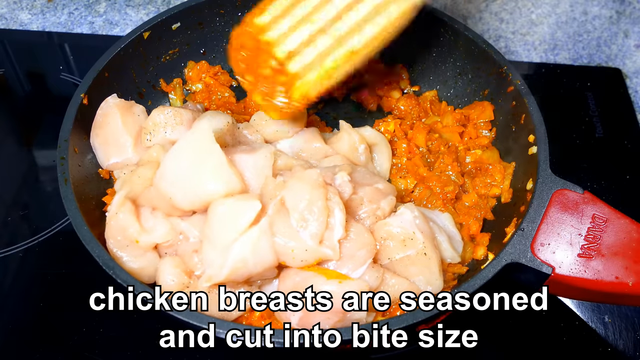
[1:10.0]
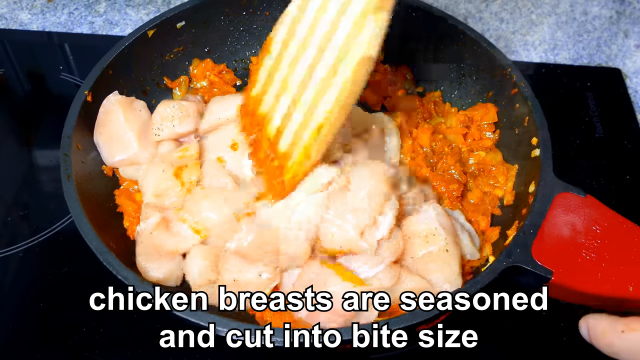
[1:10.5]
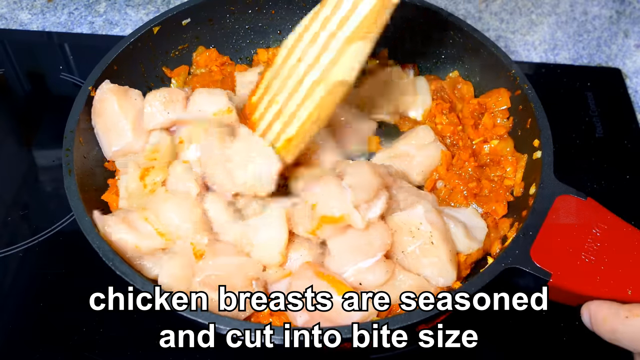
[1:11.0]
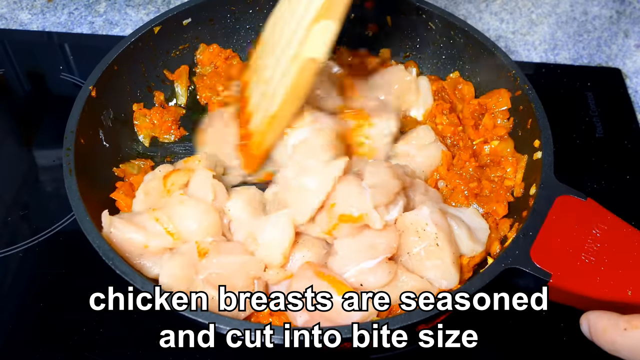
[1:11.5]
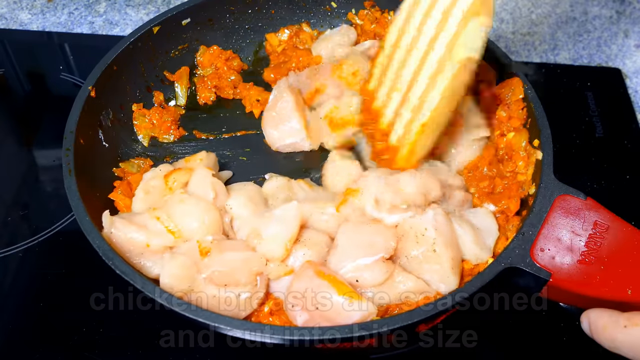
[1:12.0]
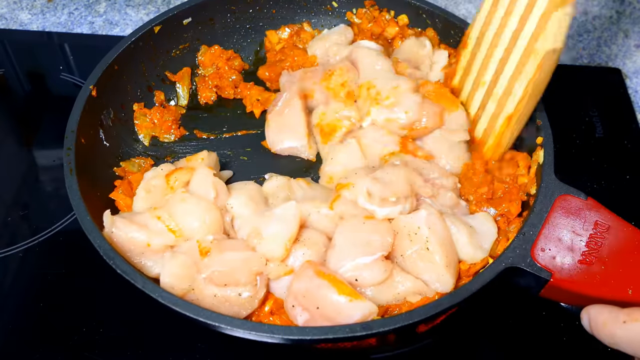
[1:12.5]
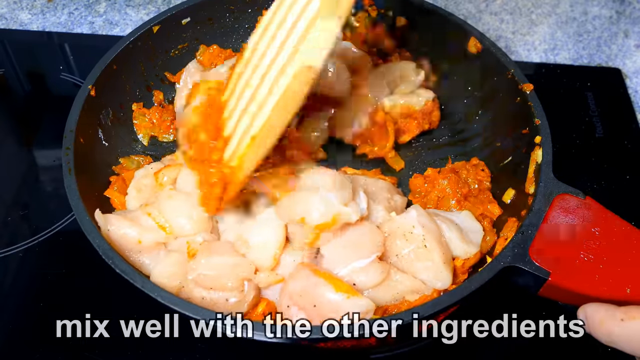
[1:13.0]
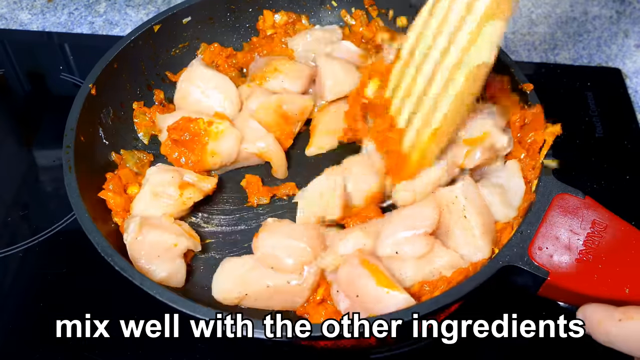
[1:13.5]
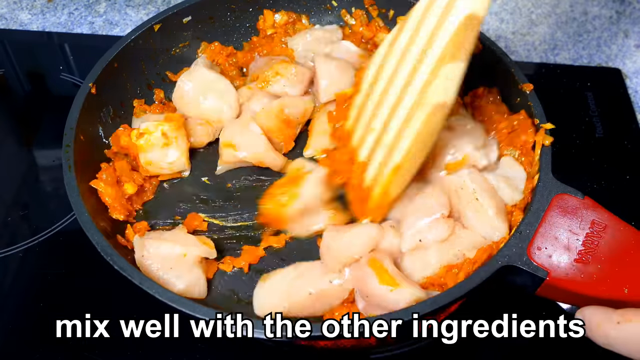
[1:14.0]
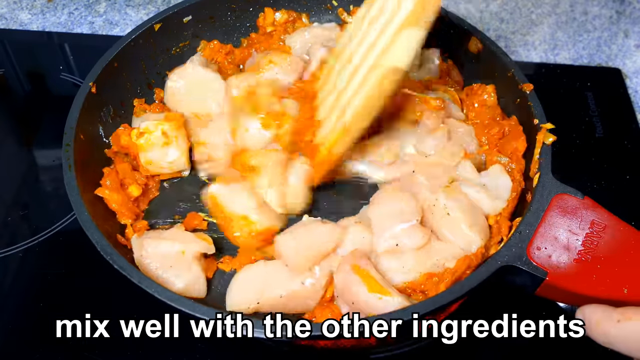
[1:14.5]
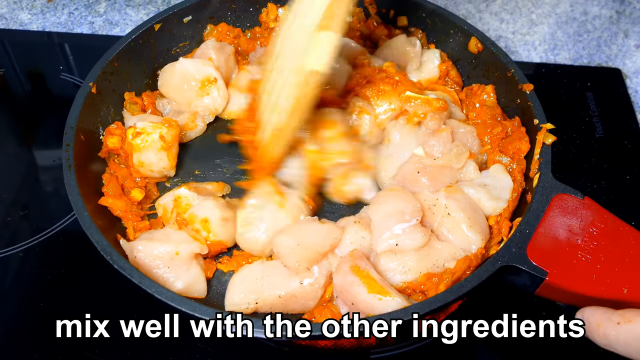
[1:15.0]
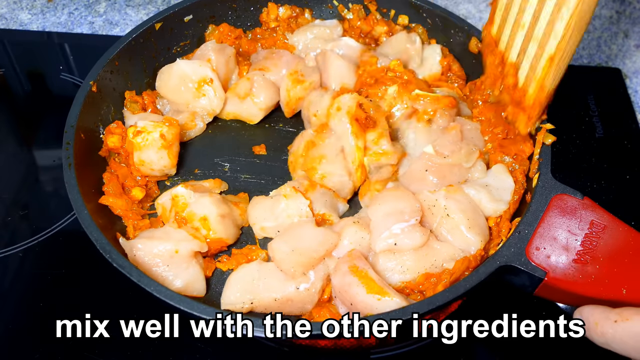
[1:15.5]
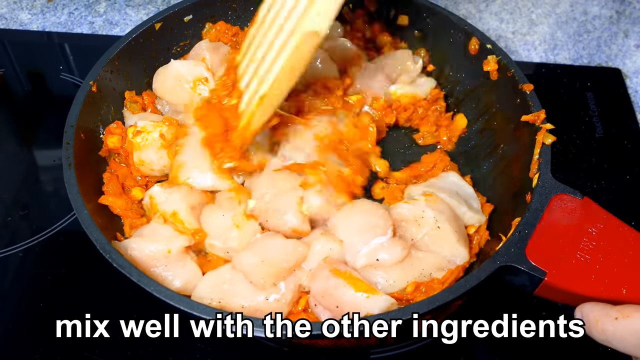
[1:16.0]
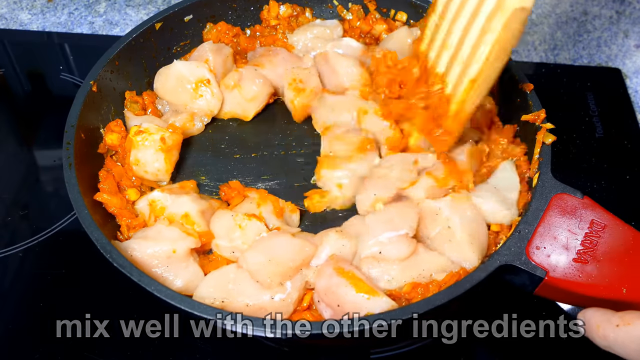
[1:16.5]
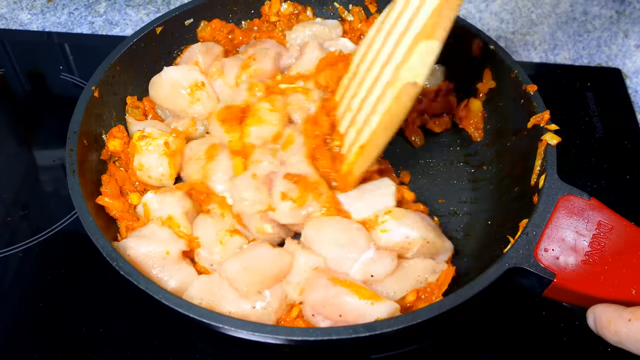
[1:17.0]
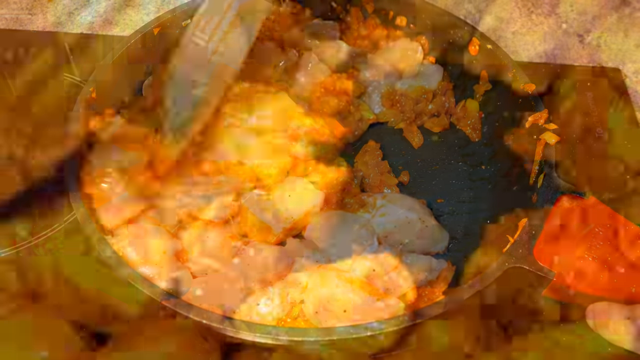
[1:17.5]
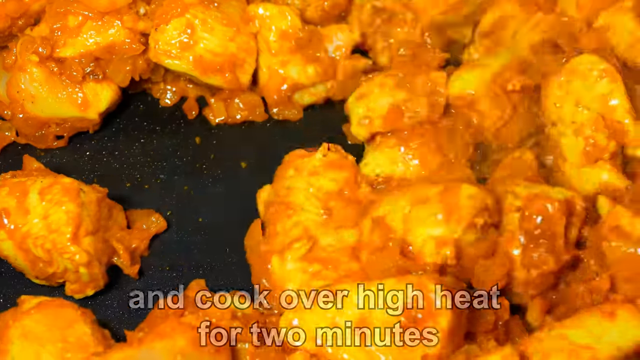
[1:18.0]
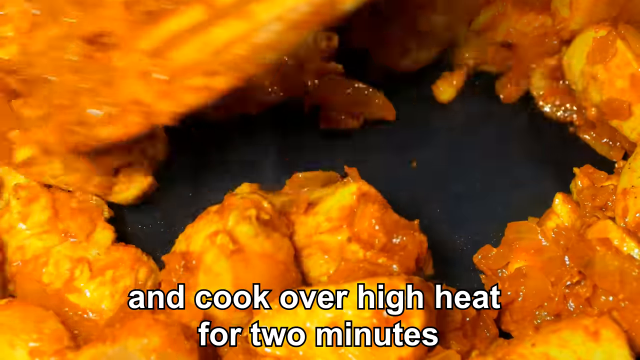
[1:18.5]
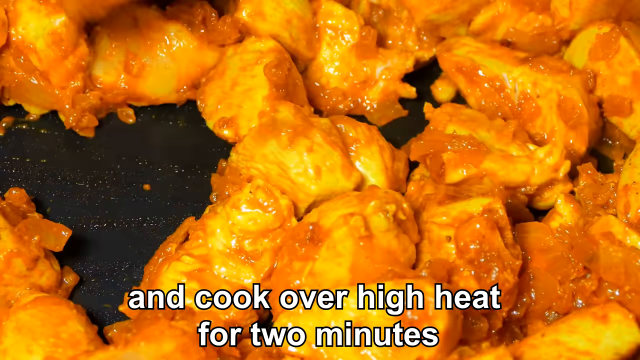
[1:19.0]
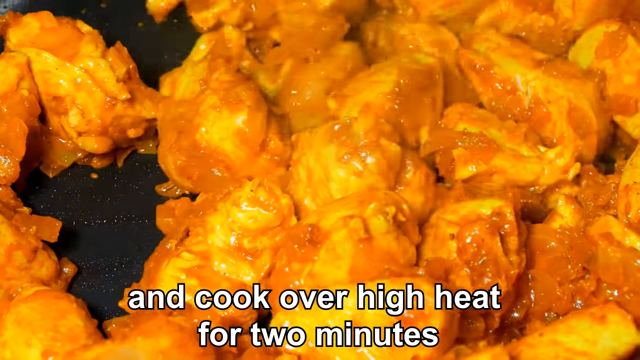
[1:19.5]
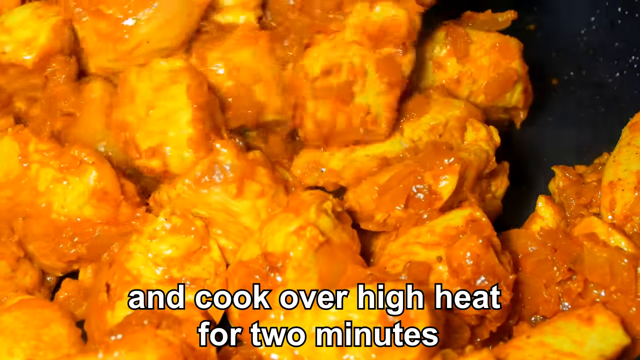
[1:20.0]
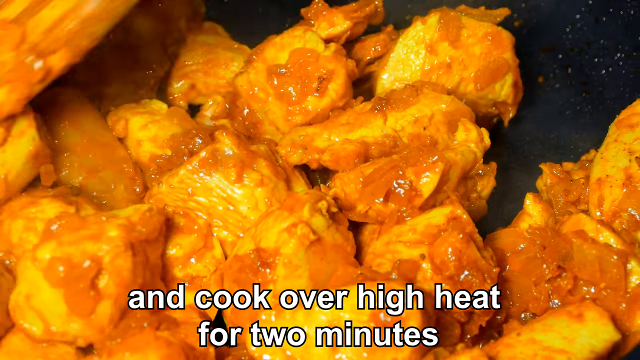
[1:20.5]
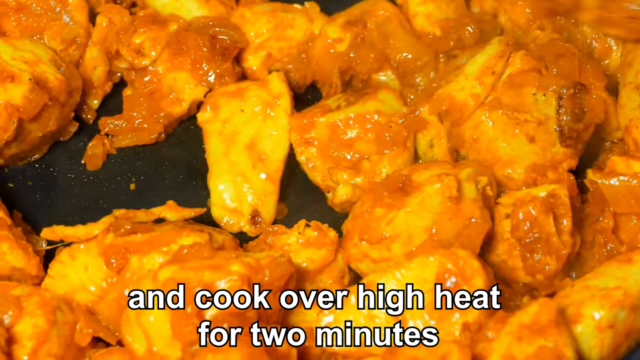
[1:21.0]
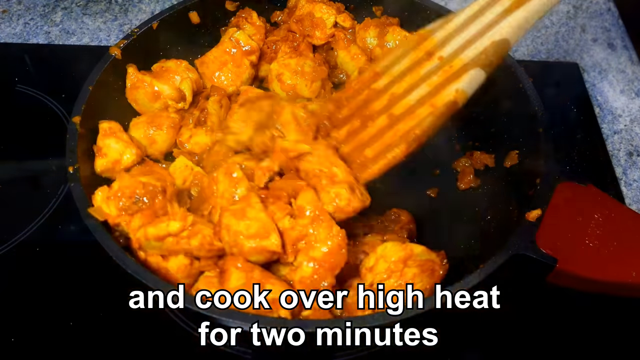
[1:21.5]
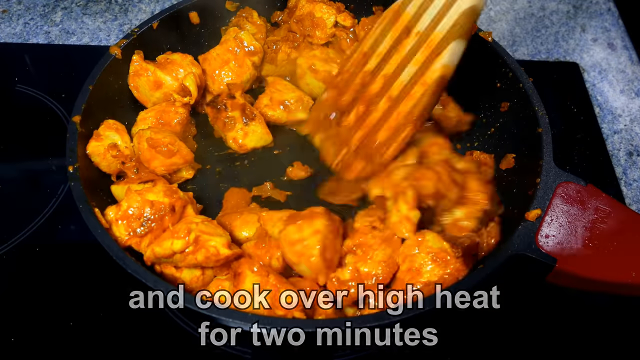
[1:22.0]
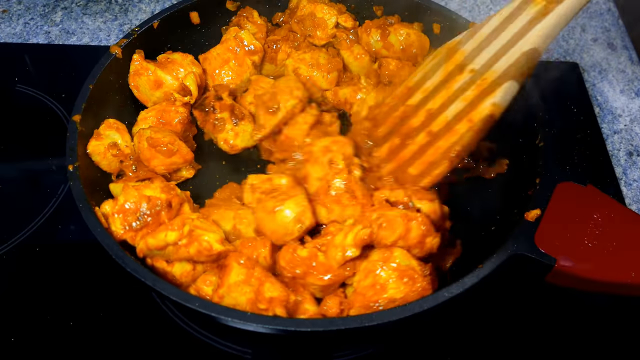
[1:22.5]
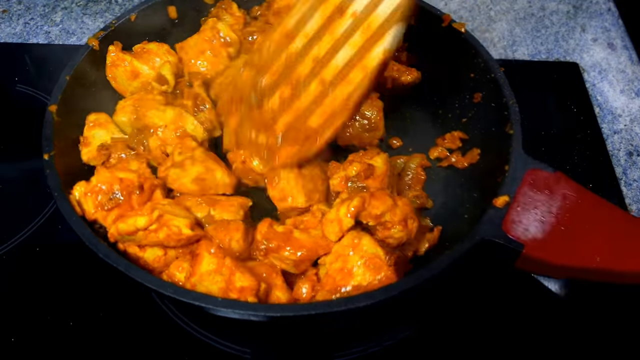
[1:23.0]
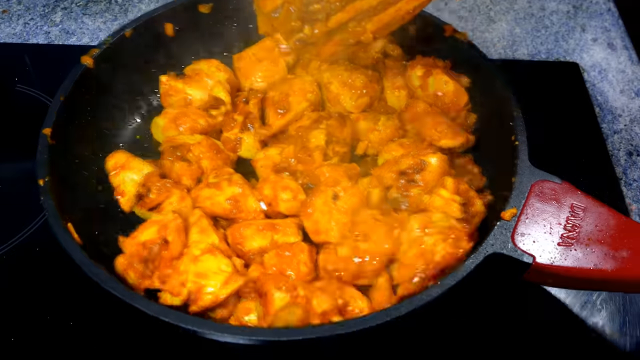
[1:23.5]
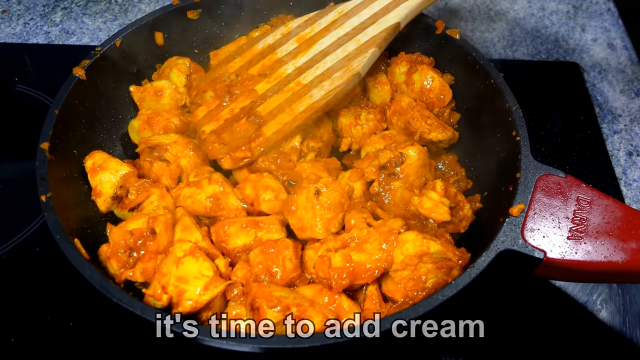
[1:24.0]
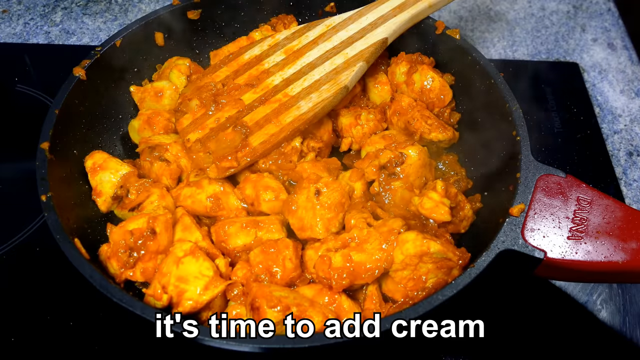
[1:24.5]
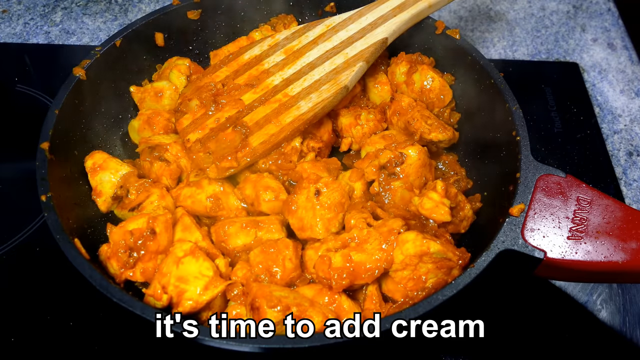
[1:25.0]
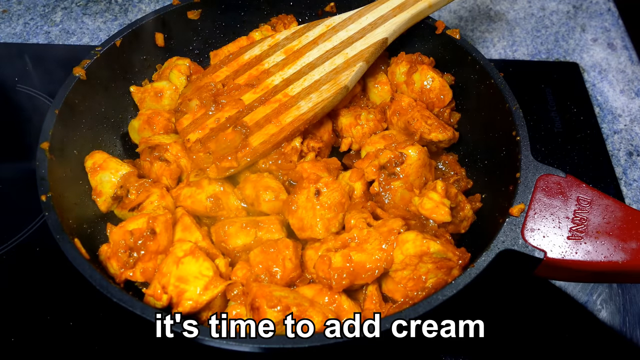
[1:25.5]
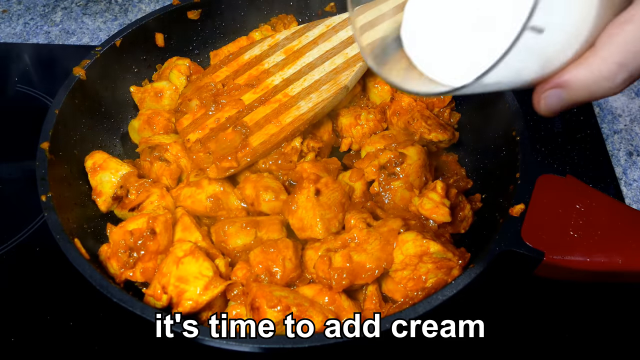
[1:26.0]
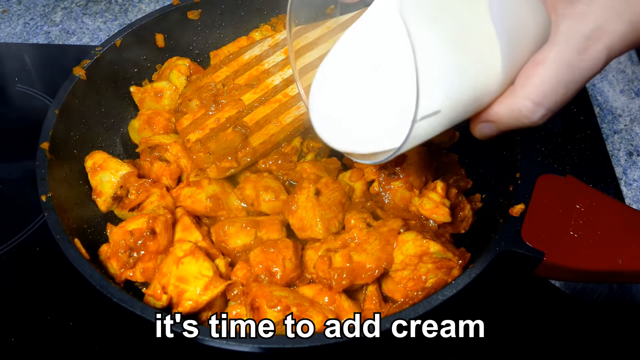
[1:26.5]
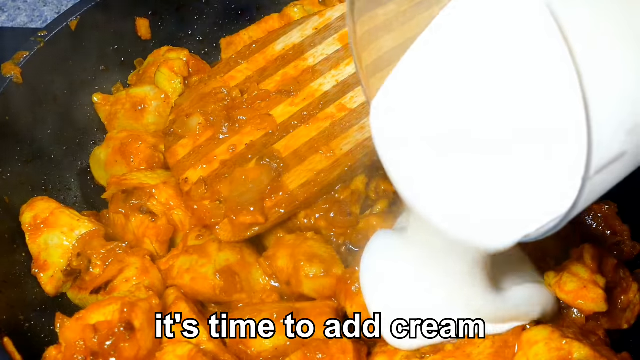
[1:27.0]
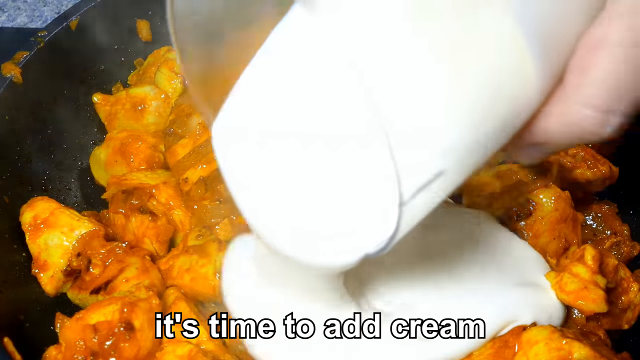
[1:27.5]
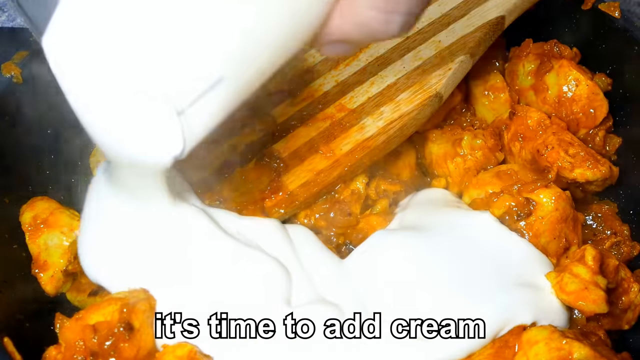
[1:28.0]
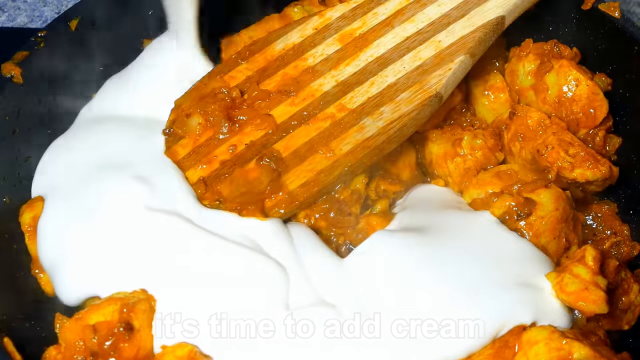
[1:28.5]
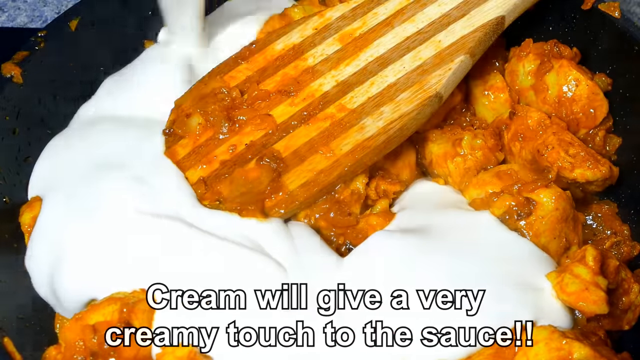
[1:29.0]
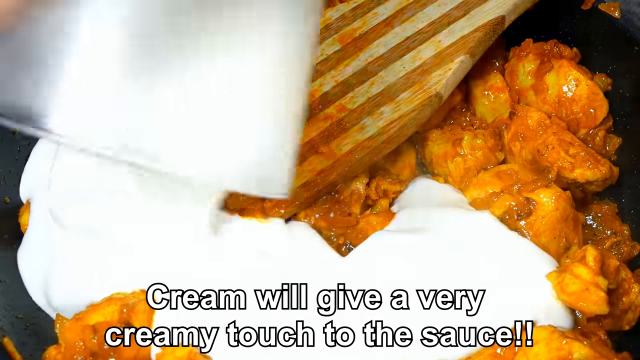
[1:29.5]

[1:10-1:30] A wooden spoon stirs the chicken into the sauce. Text says "cook over high heat for two minutes." A cup of cream is then added to the pan to be mixed with the partially cooked chicken and the other ingredients. The black pan with a red handle on the right is on a stovetop, and a wooden spoon-type spatula stirs everything together. The ingredients mix well, and the chicken begins to cook with the ingredients stuck to it. The cream appears to be the last ingredient added.